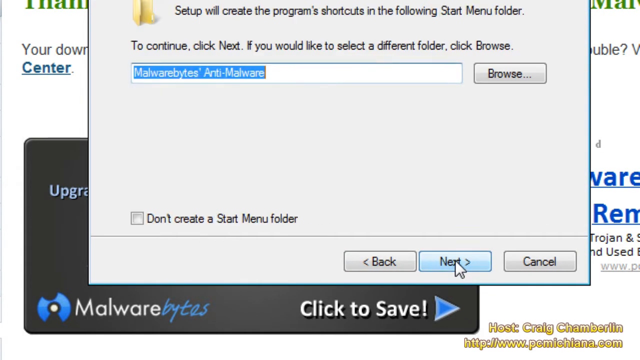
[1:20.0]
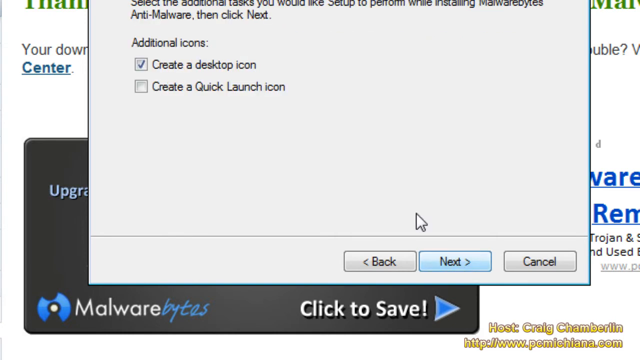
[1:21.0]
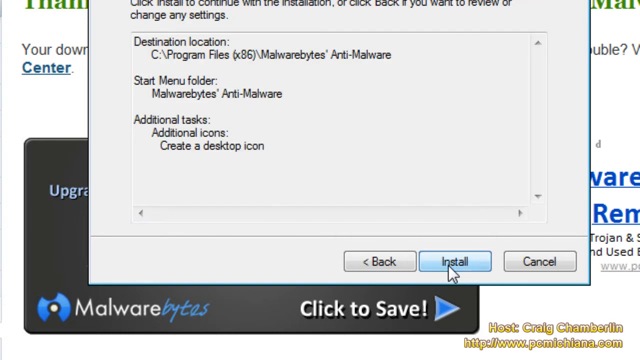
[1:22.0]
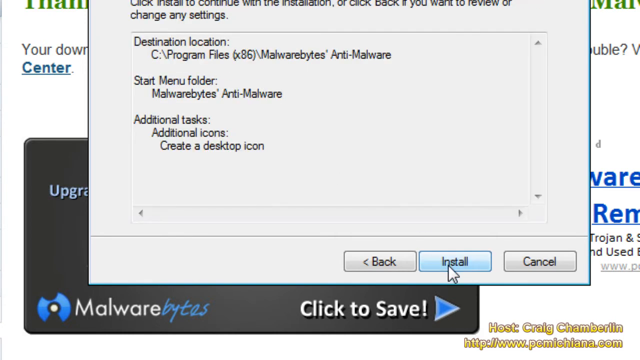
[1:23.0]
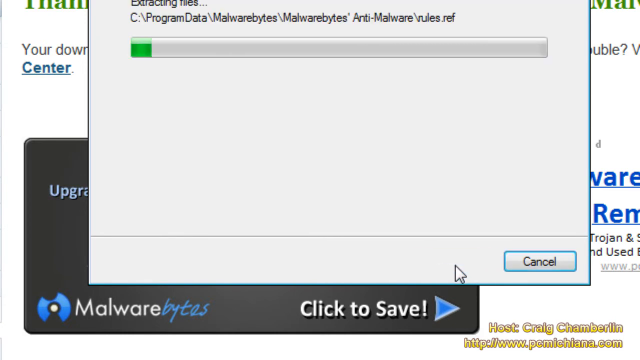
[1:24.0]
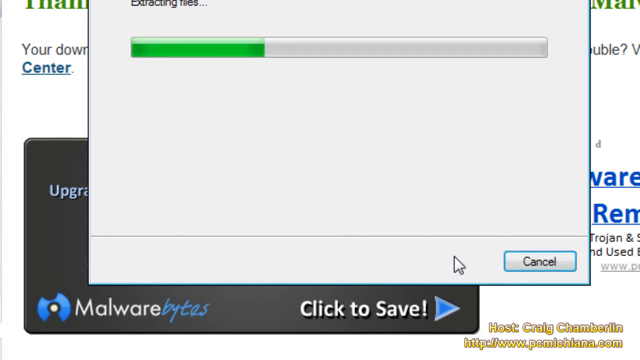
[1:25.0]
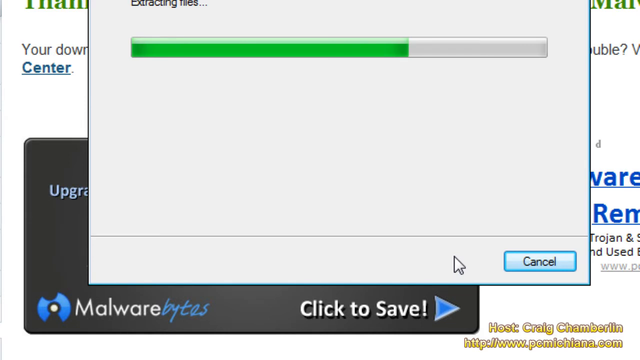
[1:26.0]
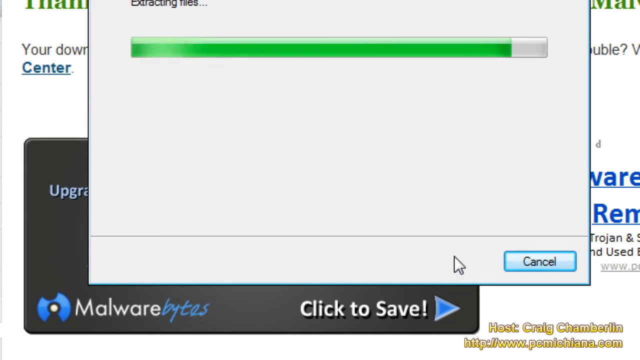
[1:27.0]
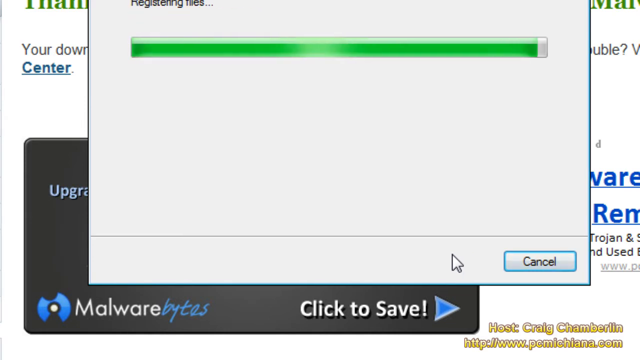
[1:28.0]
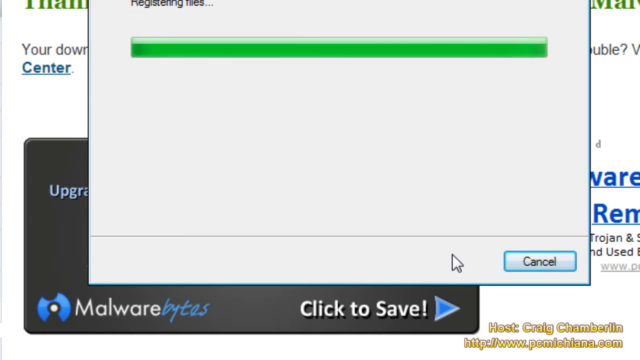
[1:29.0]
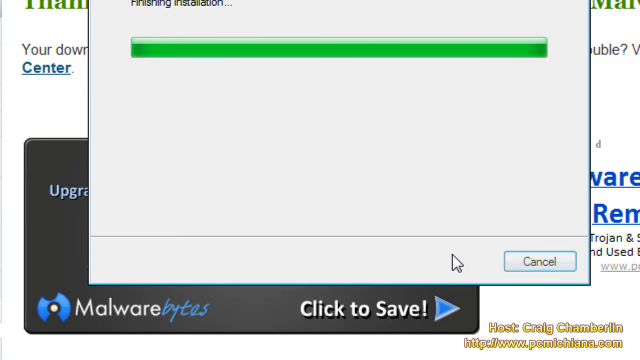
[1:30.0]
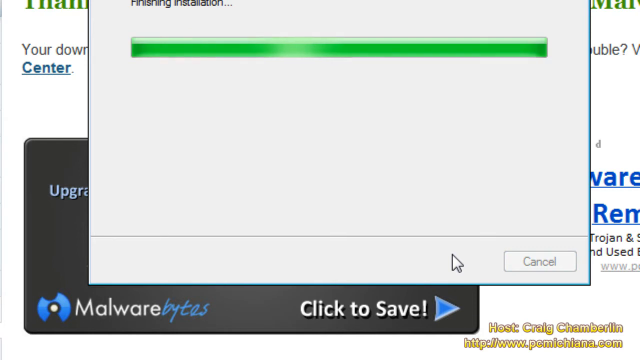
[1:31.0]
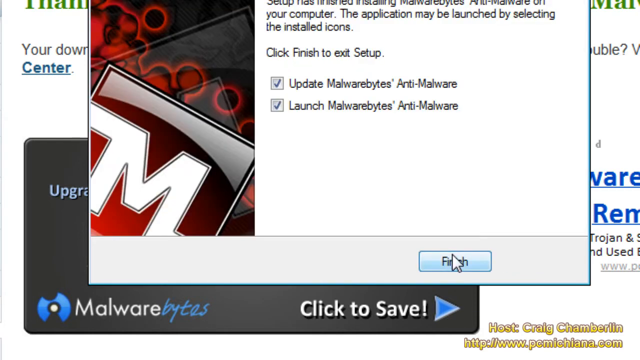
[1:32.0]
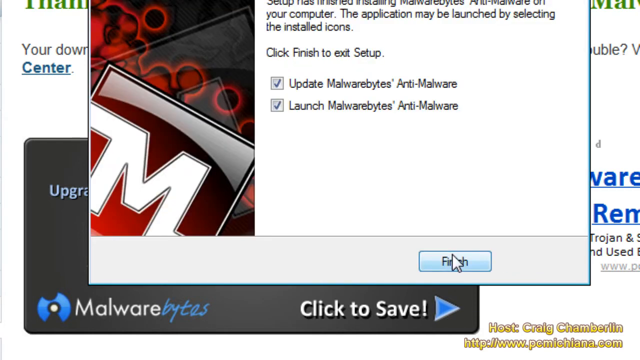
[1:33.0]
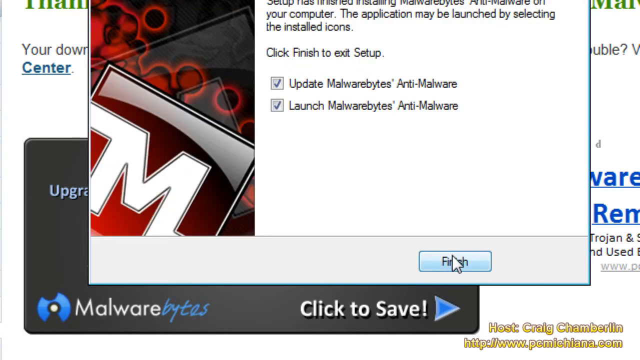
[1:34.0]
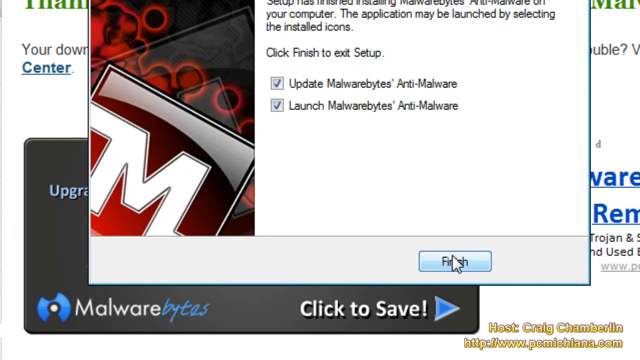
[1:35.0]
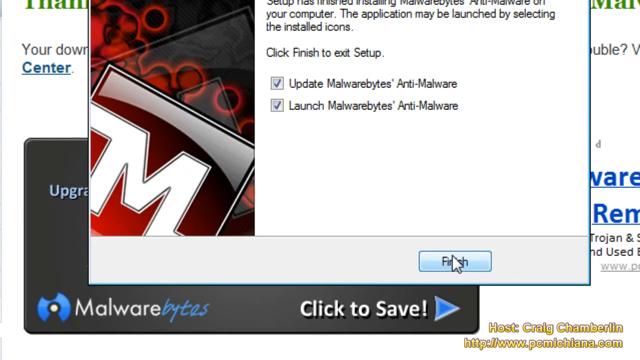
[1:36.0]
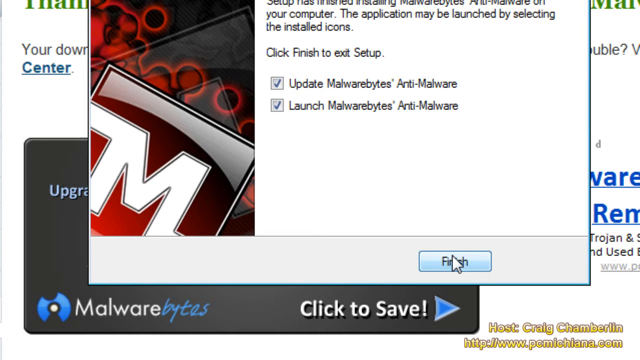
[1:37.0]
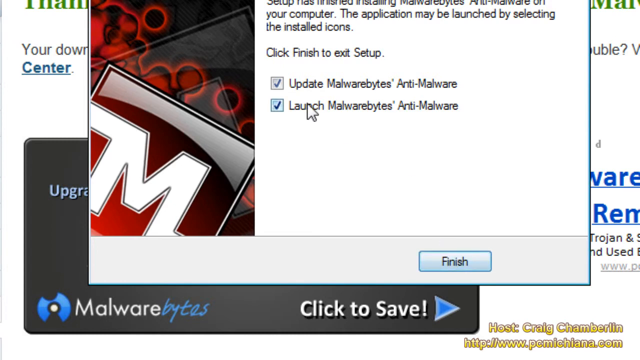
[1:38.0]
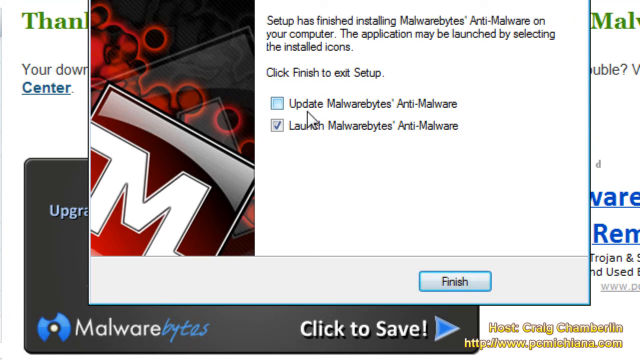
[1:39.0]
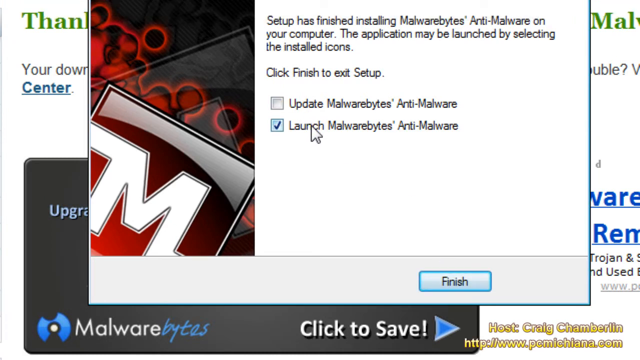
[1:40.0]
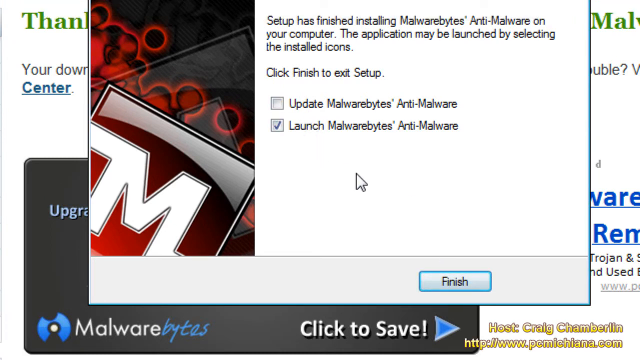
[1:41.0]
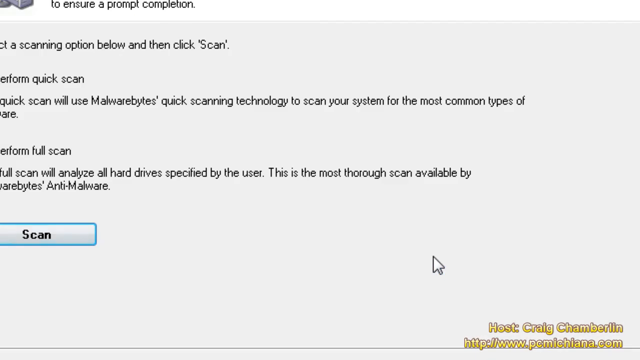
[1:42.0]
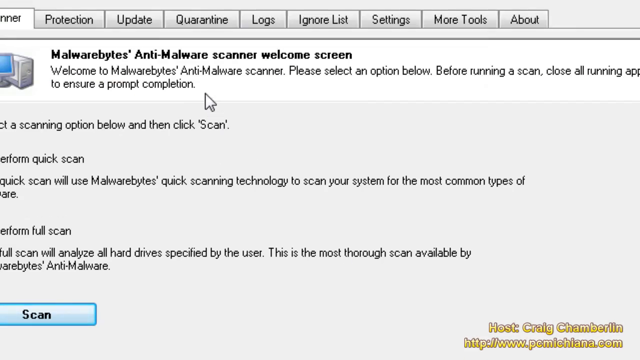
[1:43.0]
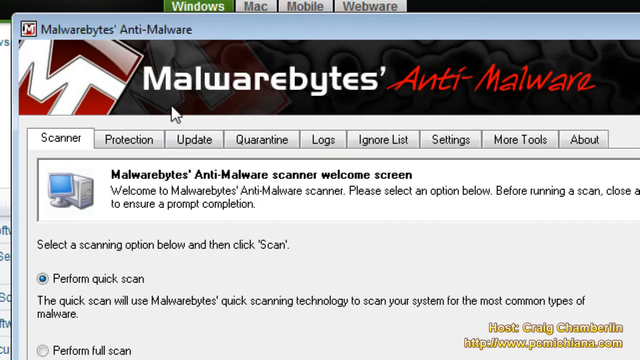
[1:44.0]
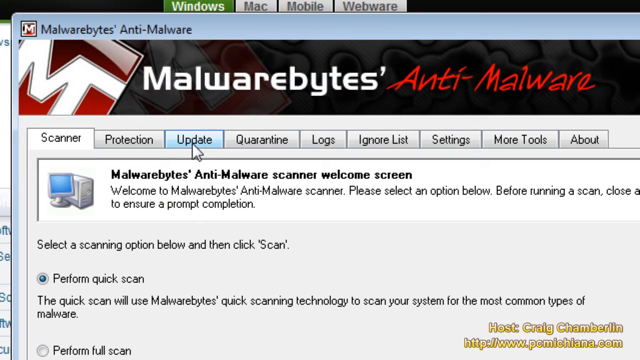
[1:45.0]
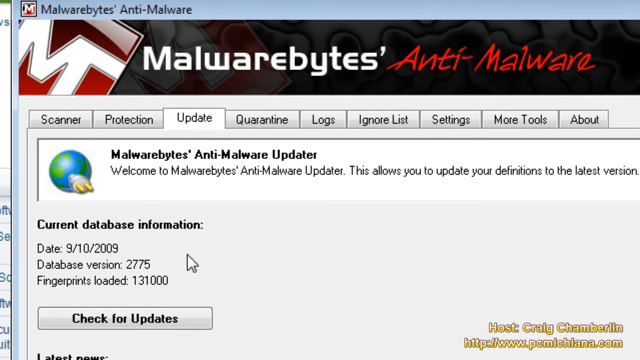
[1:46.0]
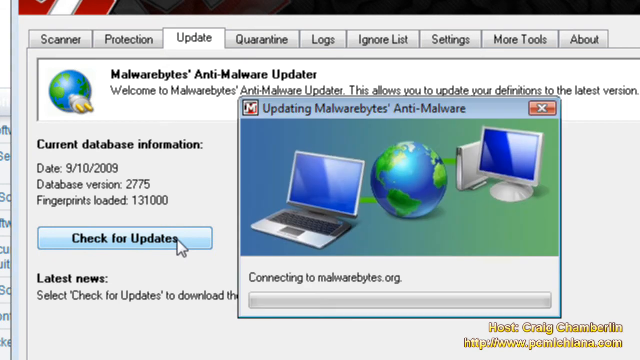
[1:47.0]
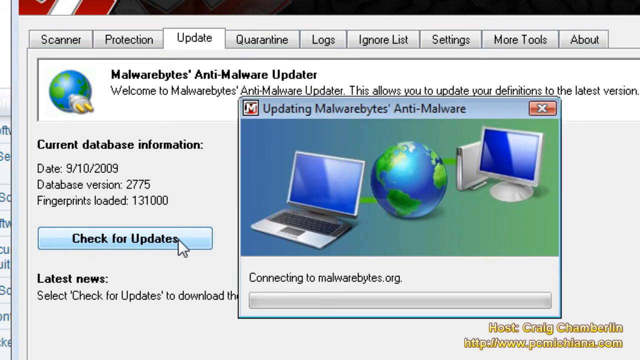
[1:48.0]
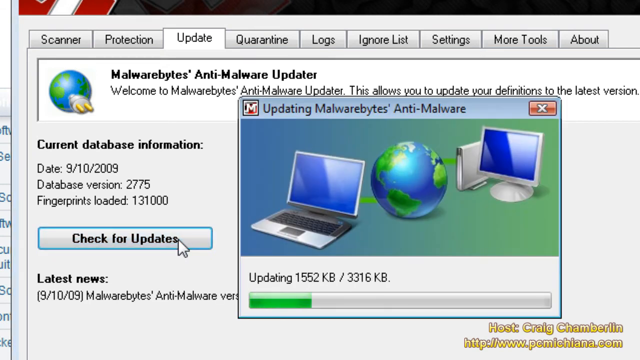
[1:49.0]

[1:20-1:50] A screen shows a destination location for the download file, and a bar fills in during a finishing installation section. Once installation completes, a message about setup for Malwarebytes appears, along with the text "the application may be launched by selecting the installed icons" and "click finish to exit the setup". Options read "update Malwarebytes anti-malware" and "launch Malwarebytes anti-malware", with boxes that can be unchecked to choose which options are wanted.